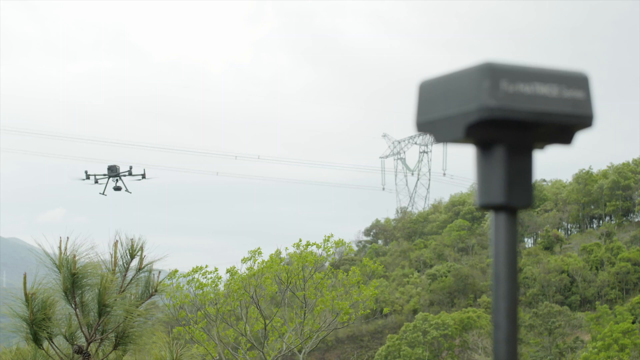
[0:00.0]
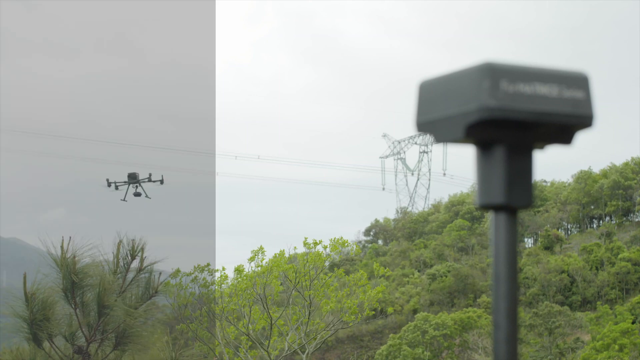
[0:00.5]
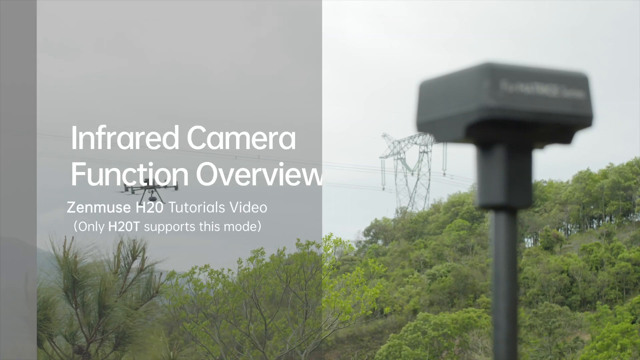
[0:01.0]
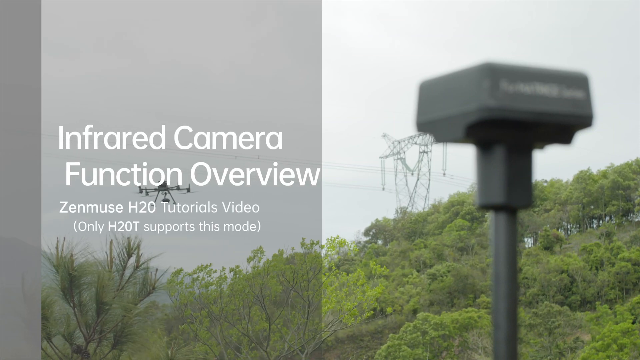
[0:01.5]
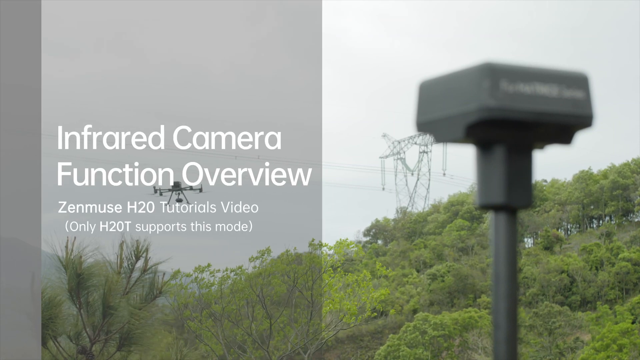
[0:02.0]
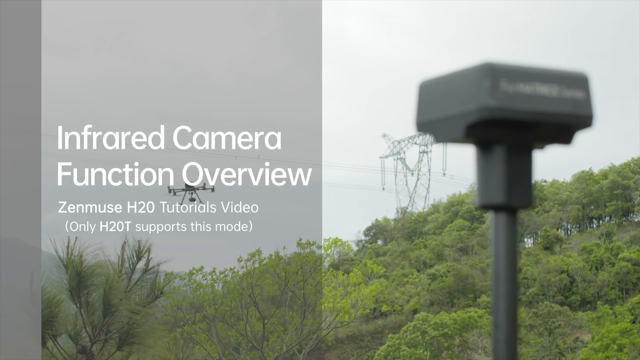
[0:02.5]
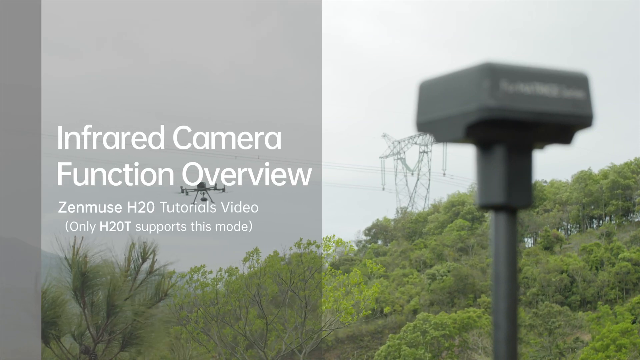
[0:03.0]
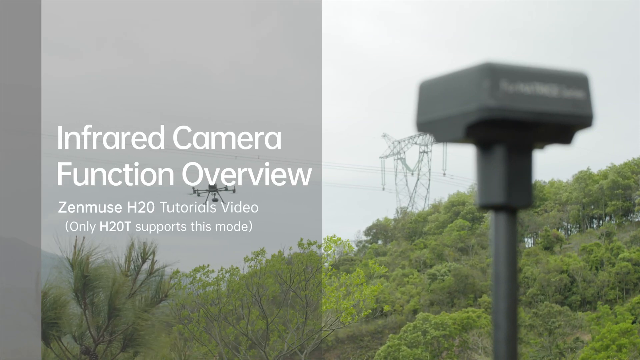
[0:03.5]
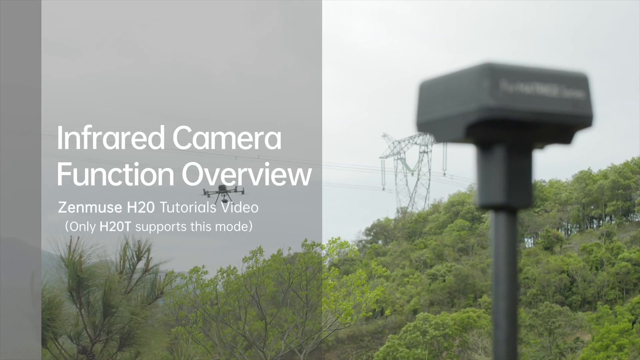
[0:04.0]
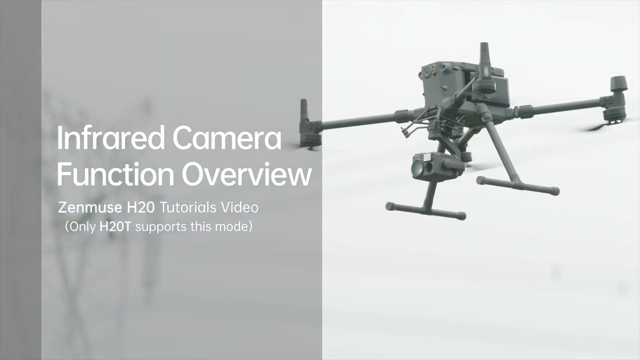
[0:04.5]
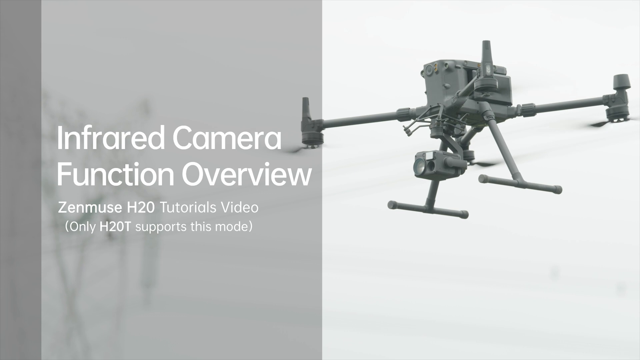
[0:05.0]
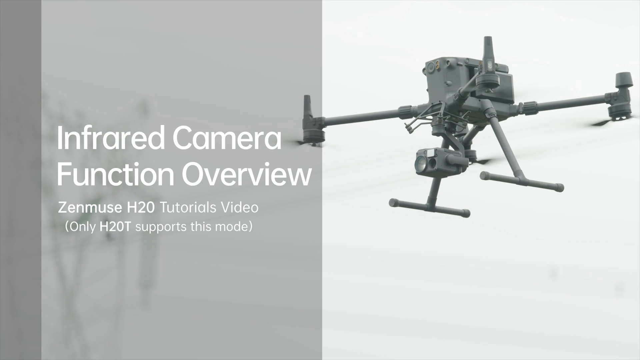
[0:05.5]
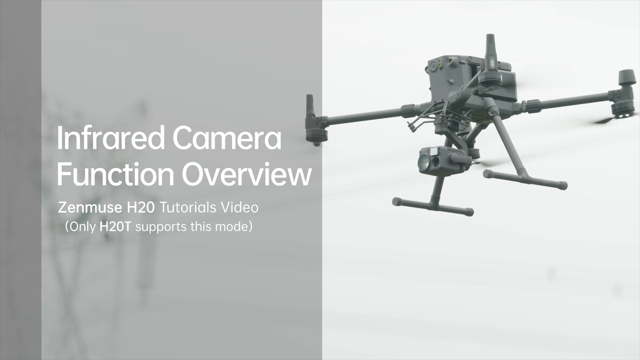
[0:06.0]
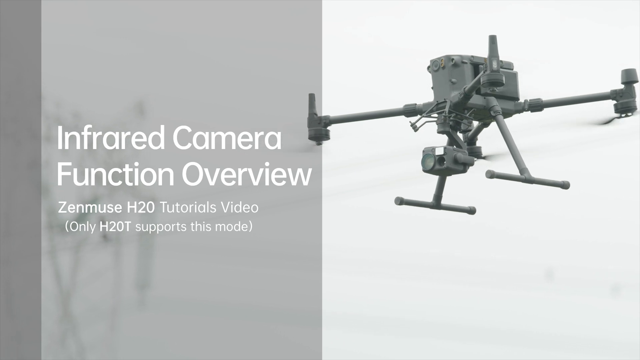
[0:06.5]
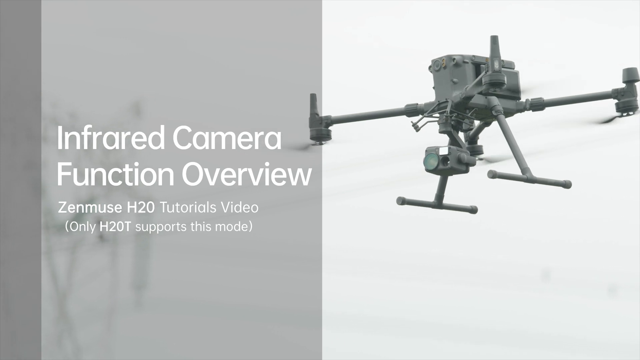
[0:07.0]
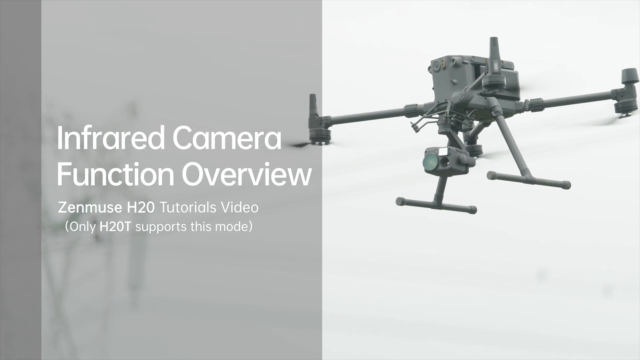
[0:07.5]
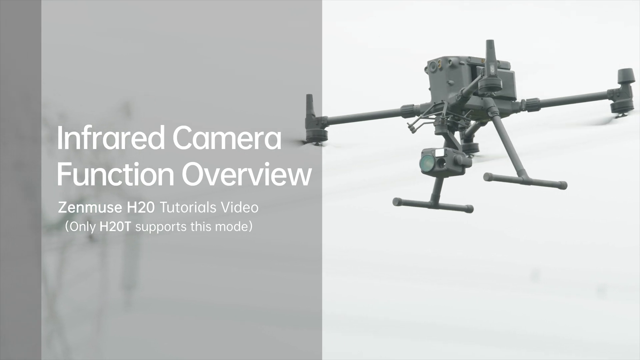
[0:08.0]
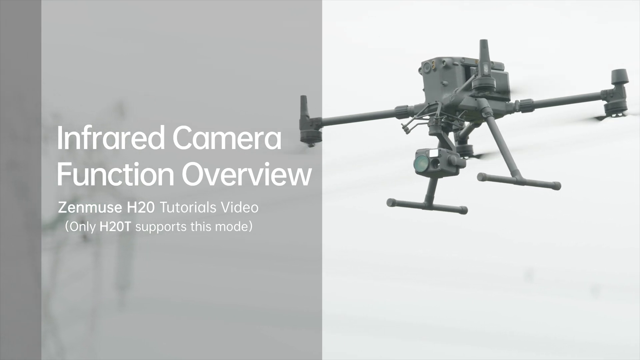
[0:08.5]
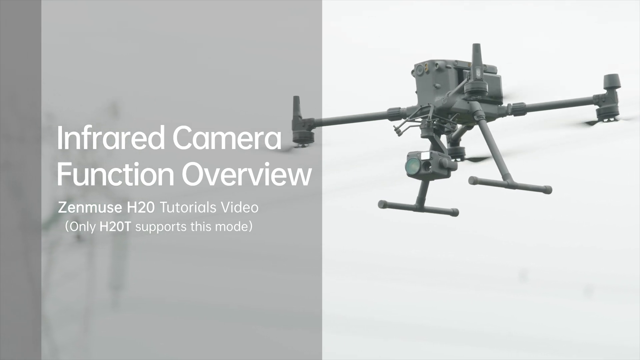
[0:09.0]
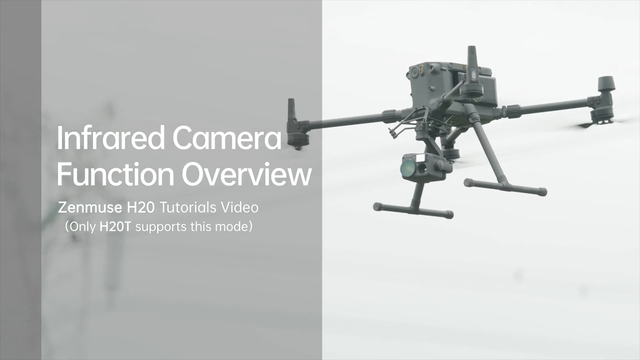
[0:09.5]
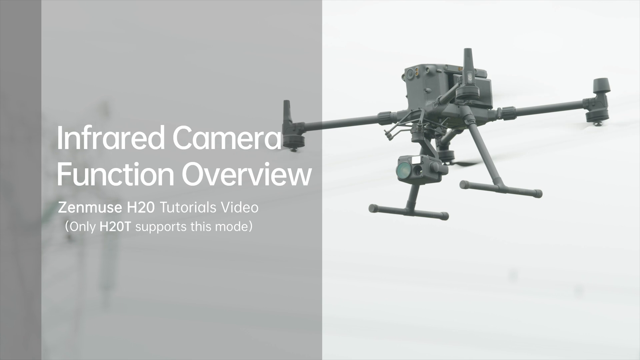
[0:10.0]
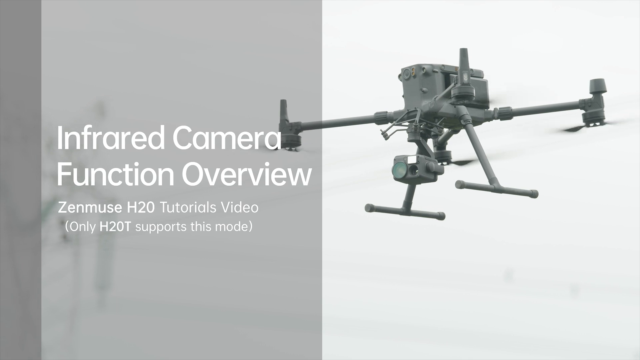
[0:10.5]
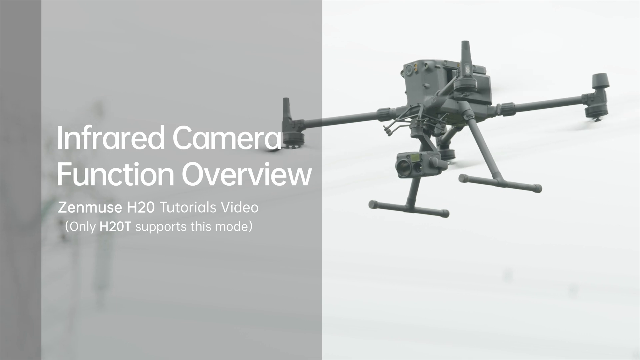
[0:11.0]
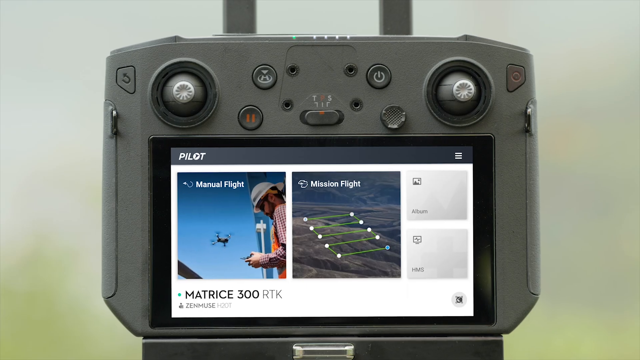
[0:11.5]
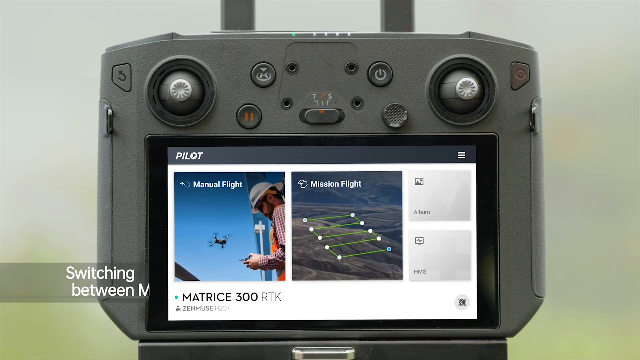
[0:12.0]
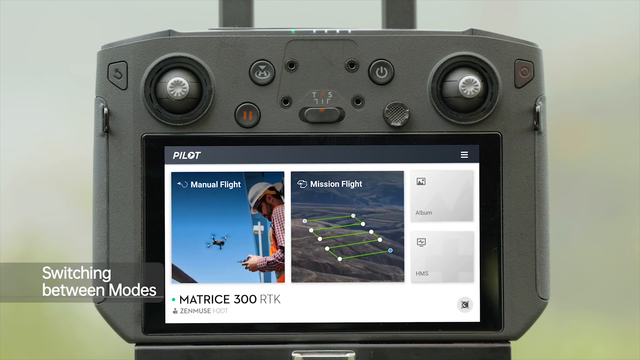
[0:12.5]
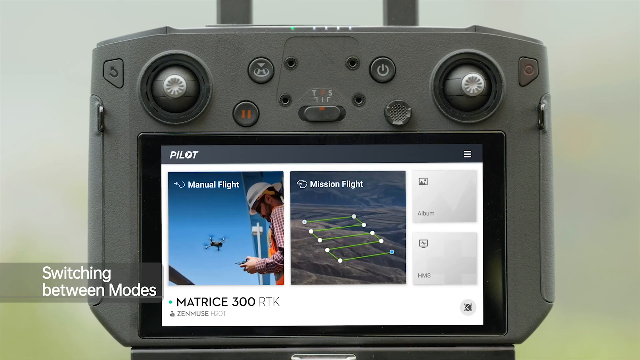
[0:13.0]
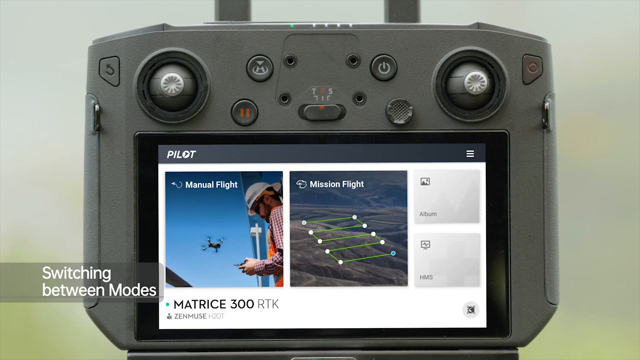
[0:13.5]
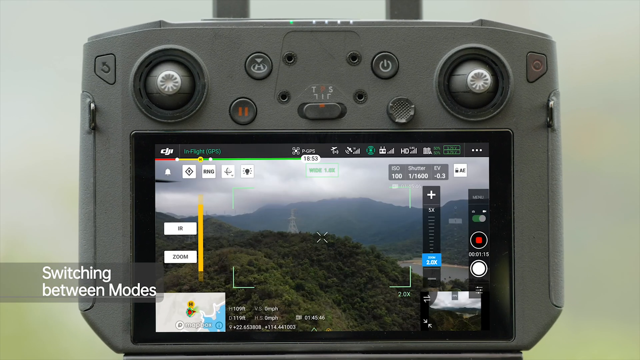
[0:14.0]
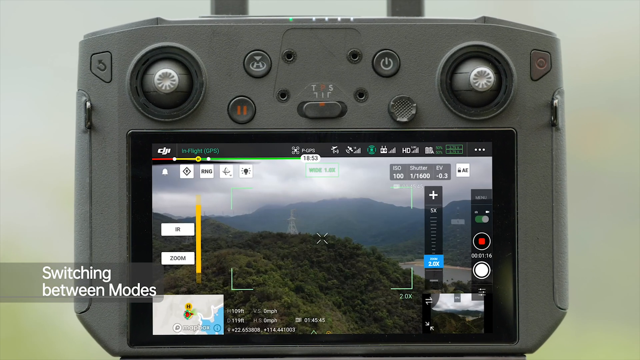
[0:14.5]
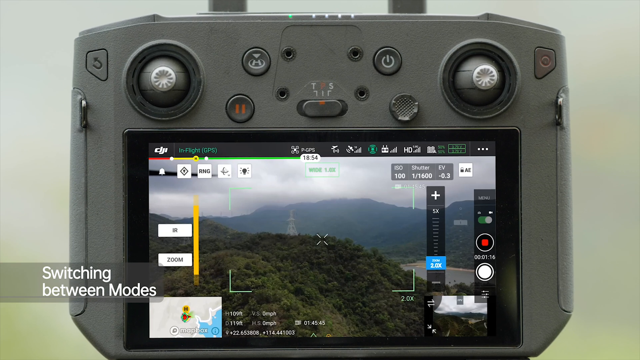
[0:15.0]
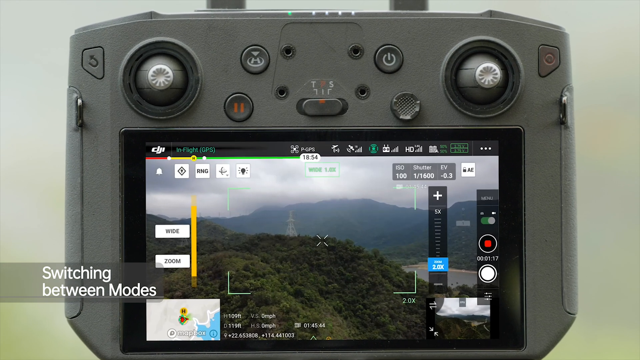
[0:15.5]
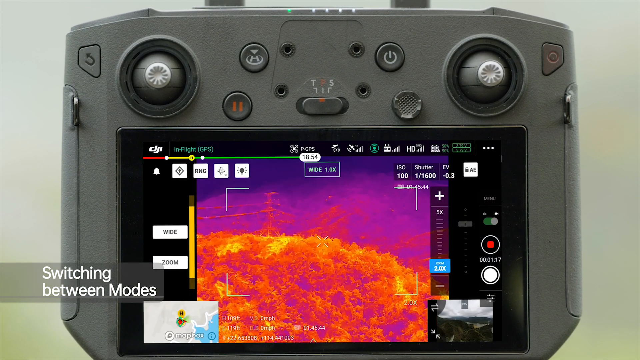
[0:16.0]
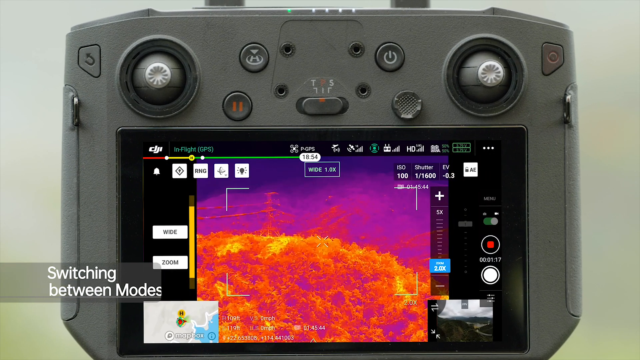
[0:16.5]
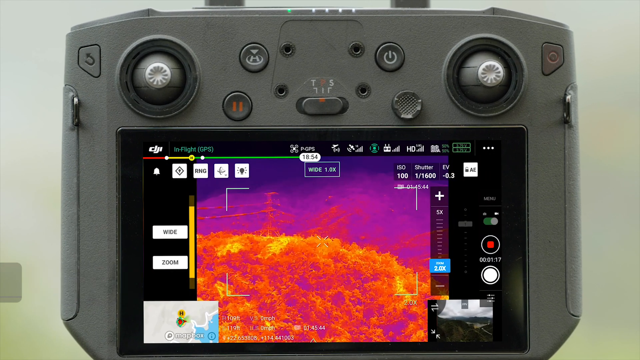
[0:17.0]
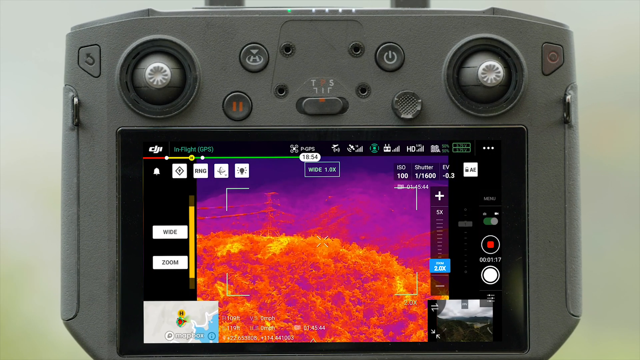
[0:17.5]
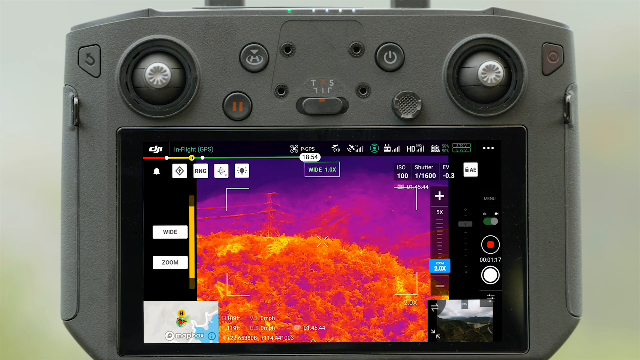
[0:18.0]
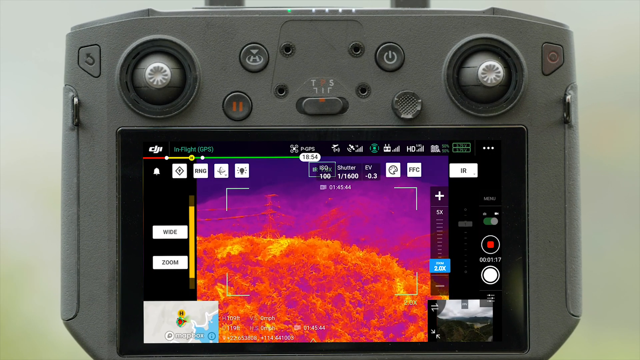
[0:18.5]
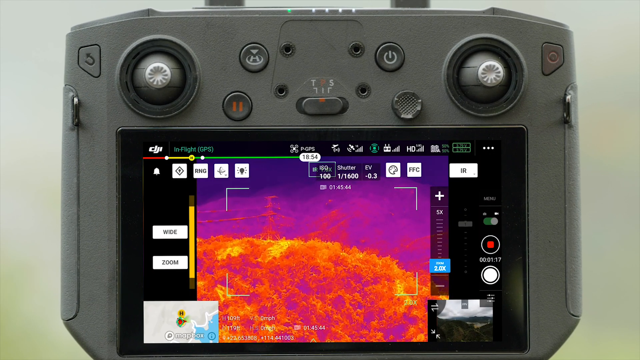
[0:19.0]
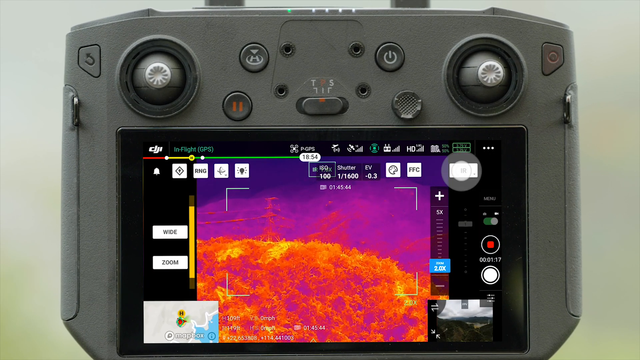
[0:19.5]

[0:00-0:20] The bottom third of the screen shows the tops of trees. On the left, in the center of the screen, is a drone with two legs coming down and four arms extending to the sides with blades on them; it seems to have a camera or something under the drone itself. To the right, in the foreground, is what looks like a transmitter or radar box, grey and oblong, on top of a grey pole. In the background is a pylon carrying power cables across from left to right, just behind the transmitter. It is a dull day and the sky in the distance is grey. Part of the left-hand side of the screen is greyed out and translucent, so the scene can still be seen behind it. Text on the screen reads "infrared camera function overview", "Zenmuse H20 tutorials video" and, in brackets, "only H20T supports this mode". On the right of the screen is a close-up of the grey drone, with its two T-shaped feet protruding below it, the camera below the drone facing to the left and front of the screen, and all four arms coming out at the corners from the main box of the drone. The drone is hovering, and the camera begins to tilt and move. The scene then switches to an image of the remote control, which fills the screen, with text at the bottom reading "switch between modes". The remote is dark grey, with joypad thumb controls at the top left and top right, and the bottom two thirds taken up by its screen showing the view from the drone. The view switches to infrared mode.